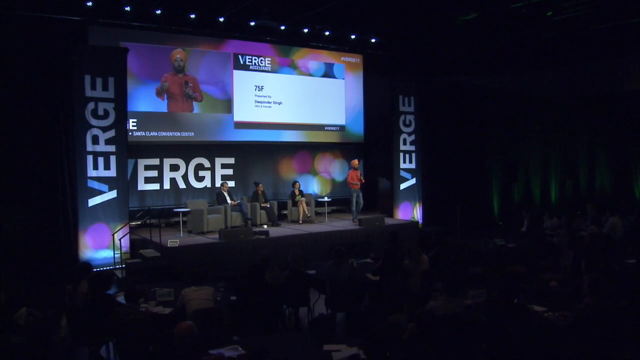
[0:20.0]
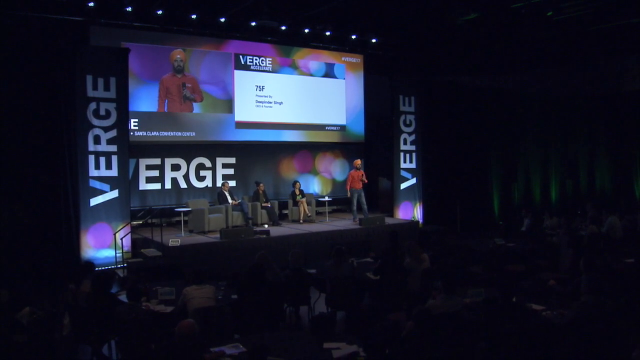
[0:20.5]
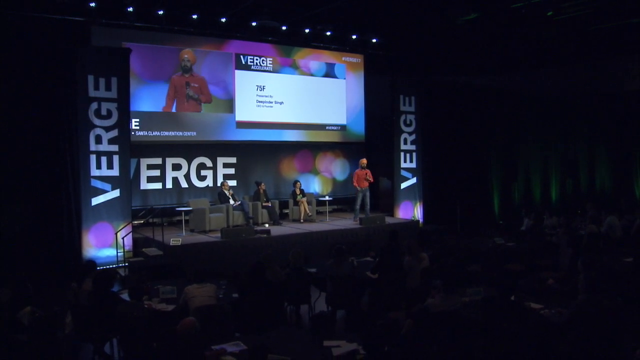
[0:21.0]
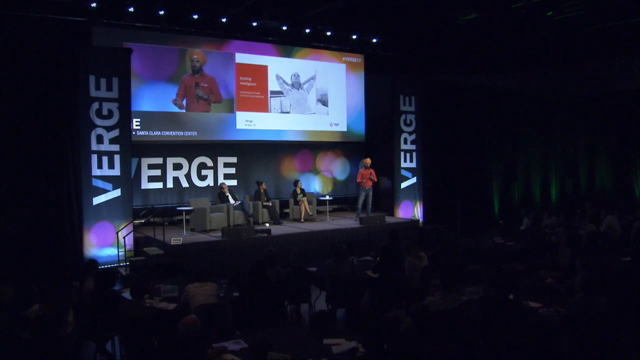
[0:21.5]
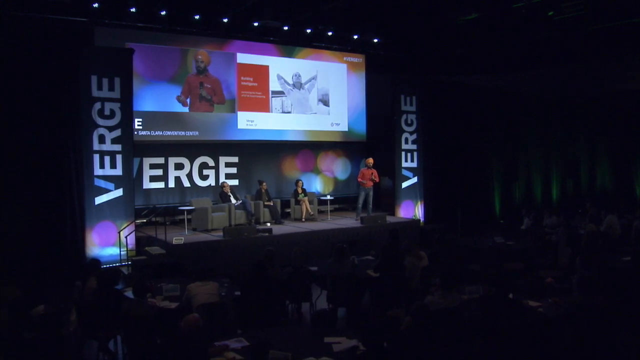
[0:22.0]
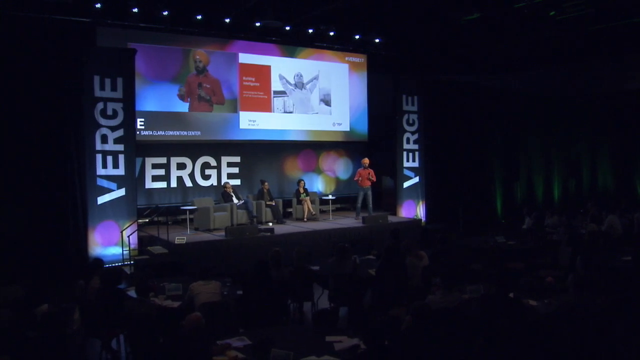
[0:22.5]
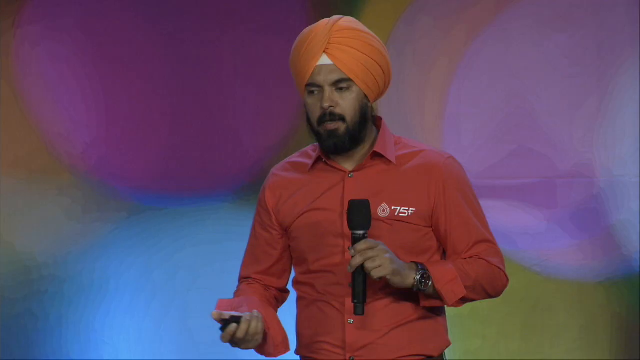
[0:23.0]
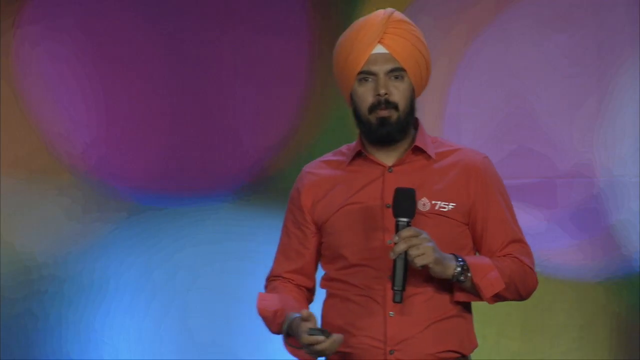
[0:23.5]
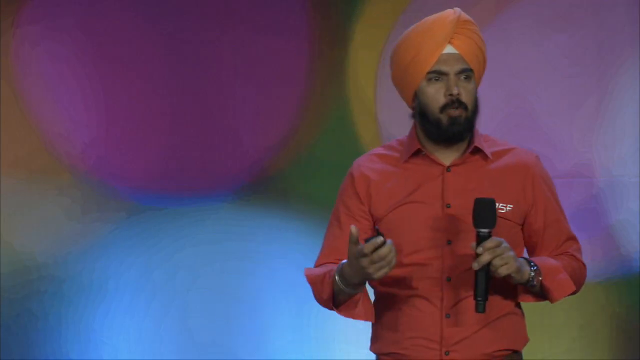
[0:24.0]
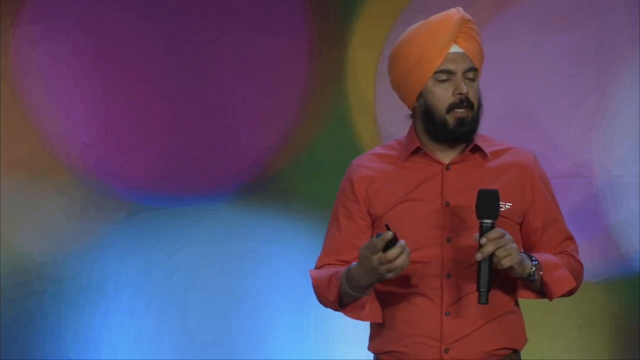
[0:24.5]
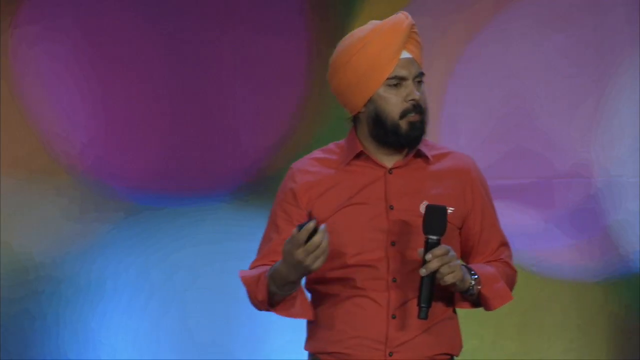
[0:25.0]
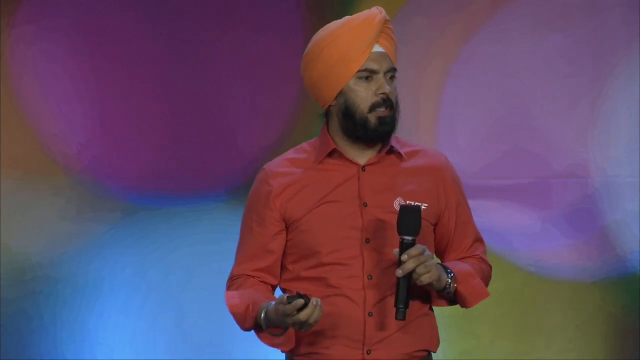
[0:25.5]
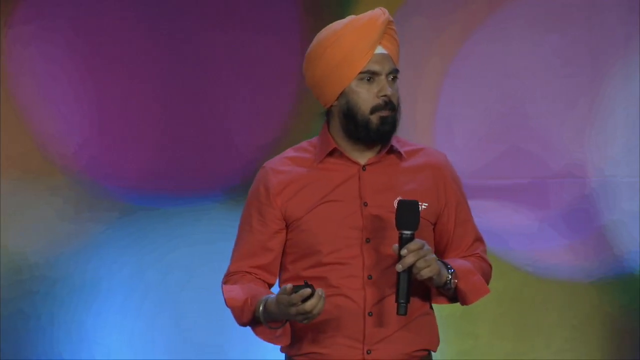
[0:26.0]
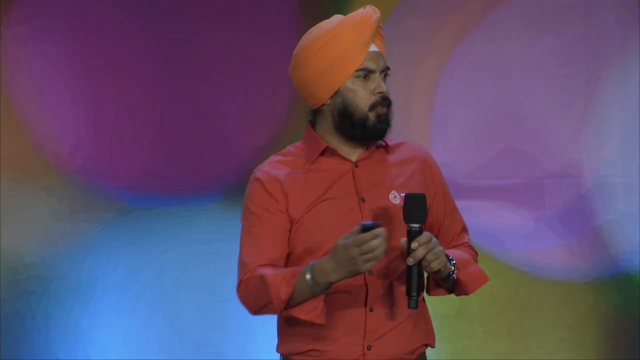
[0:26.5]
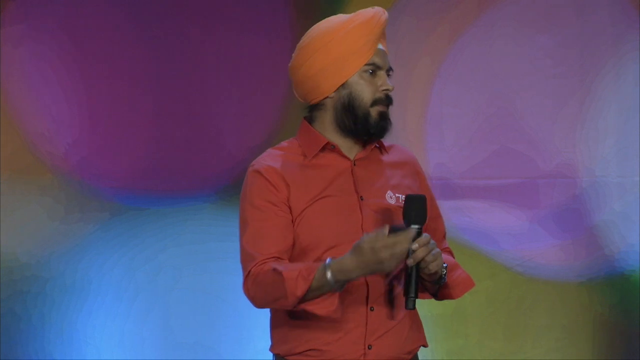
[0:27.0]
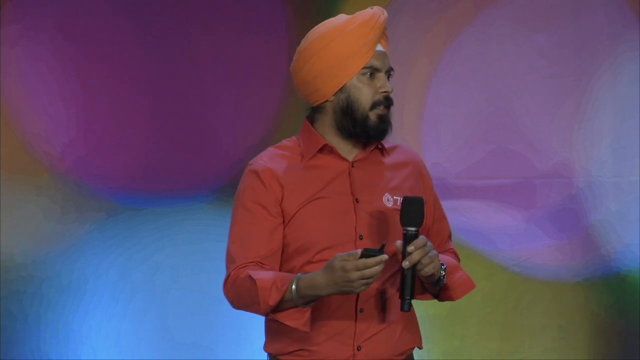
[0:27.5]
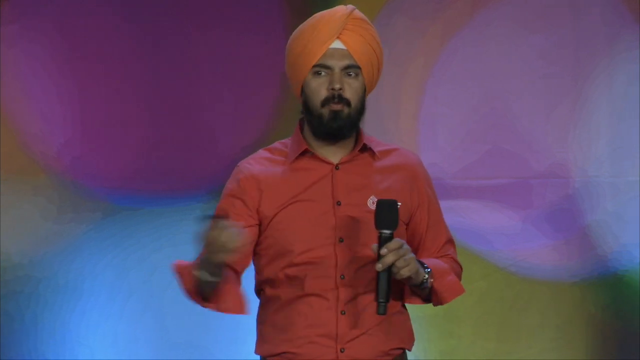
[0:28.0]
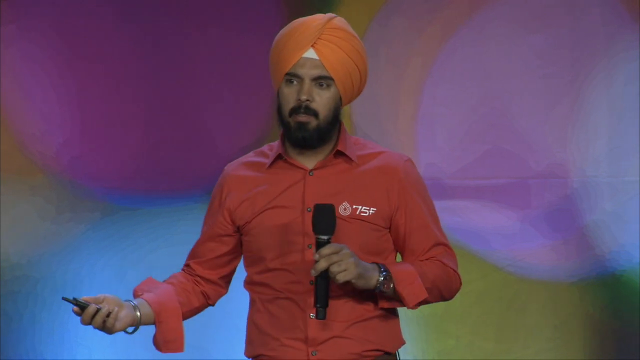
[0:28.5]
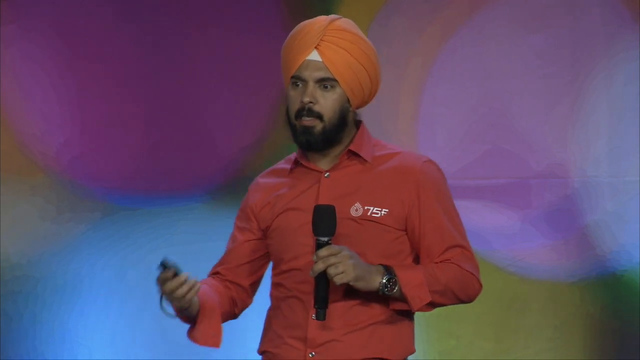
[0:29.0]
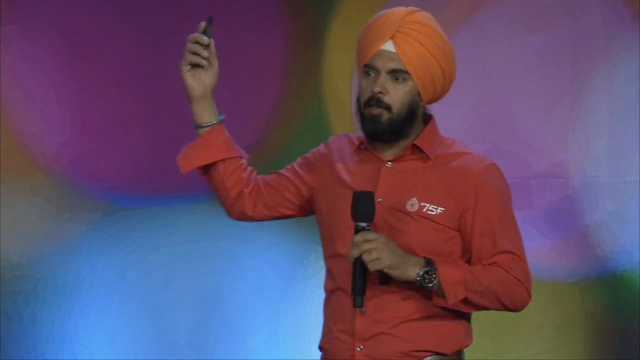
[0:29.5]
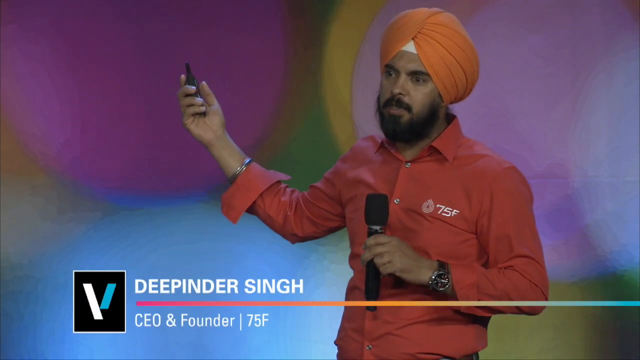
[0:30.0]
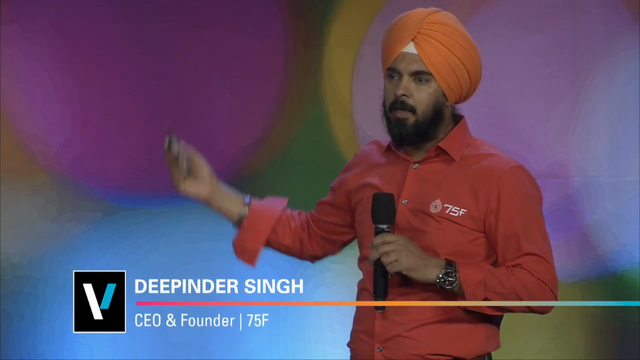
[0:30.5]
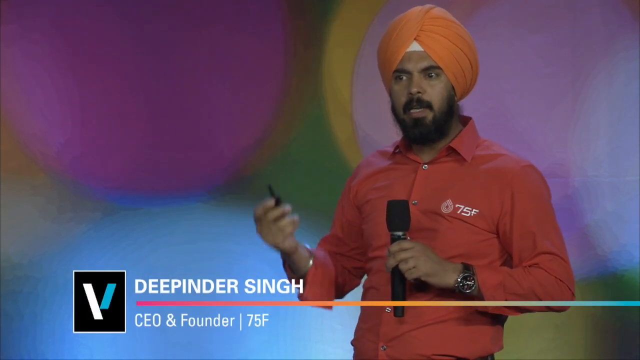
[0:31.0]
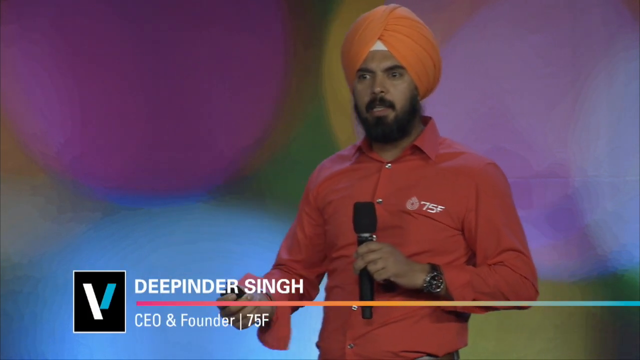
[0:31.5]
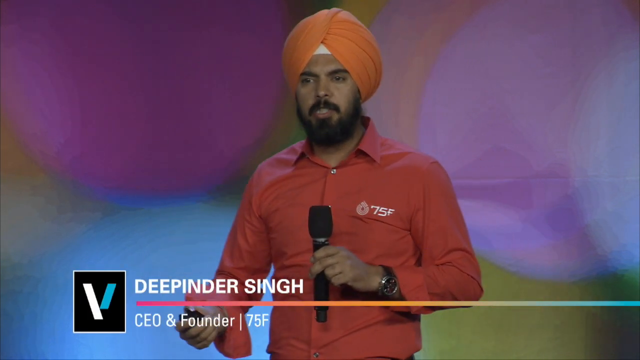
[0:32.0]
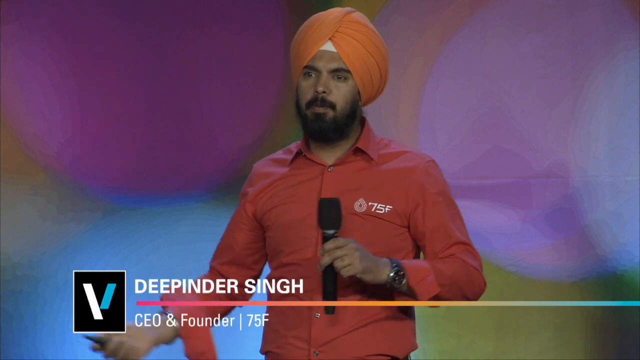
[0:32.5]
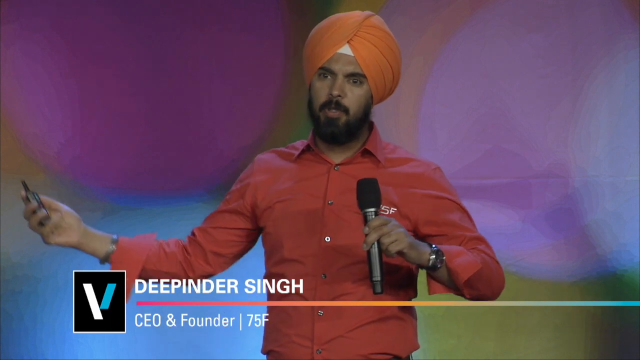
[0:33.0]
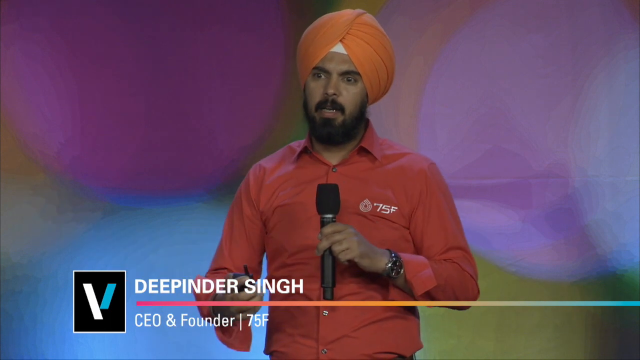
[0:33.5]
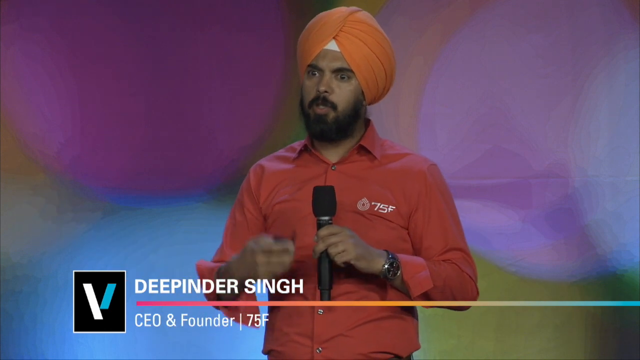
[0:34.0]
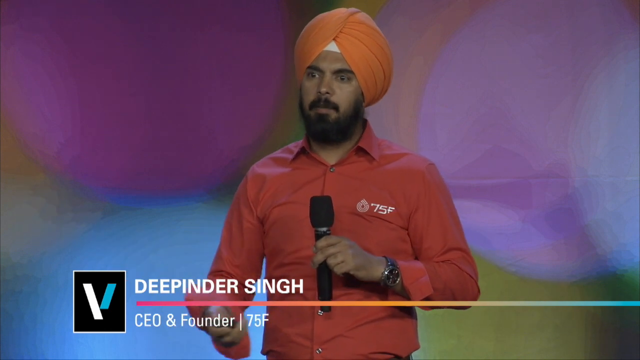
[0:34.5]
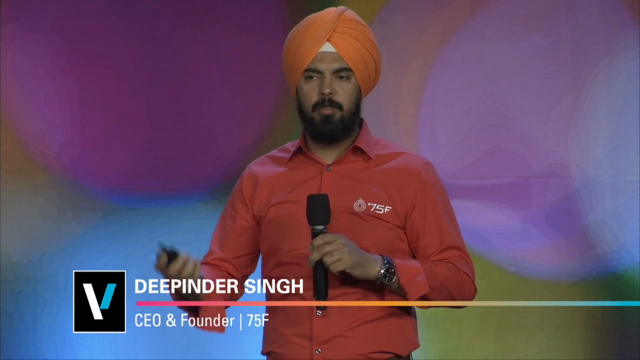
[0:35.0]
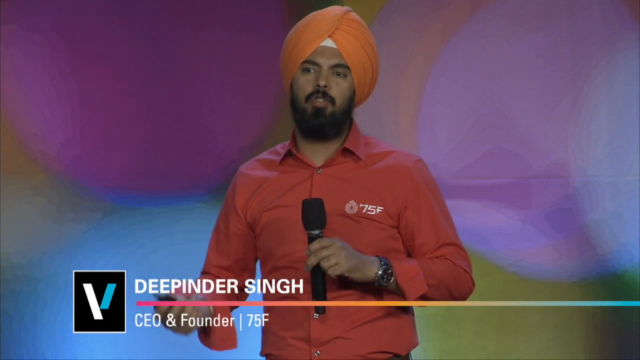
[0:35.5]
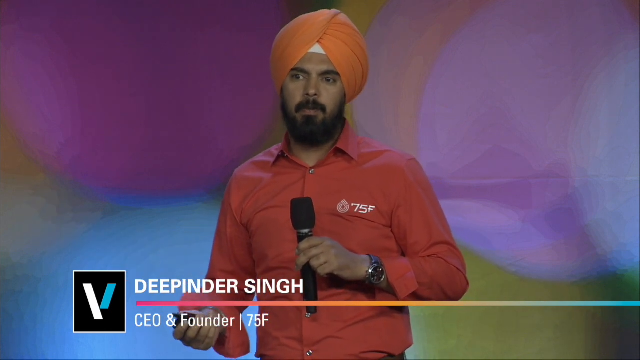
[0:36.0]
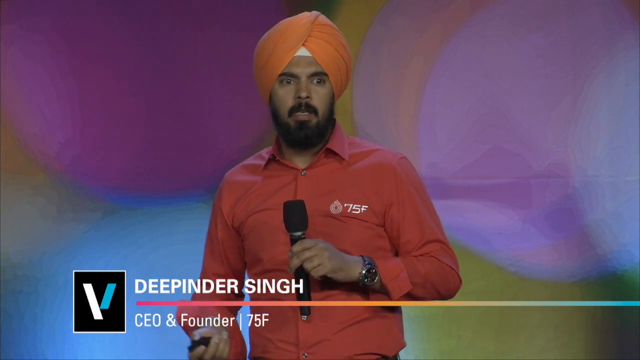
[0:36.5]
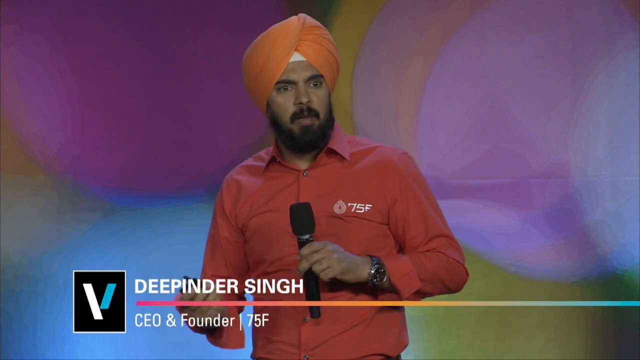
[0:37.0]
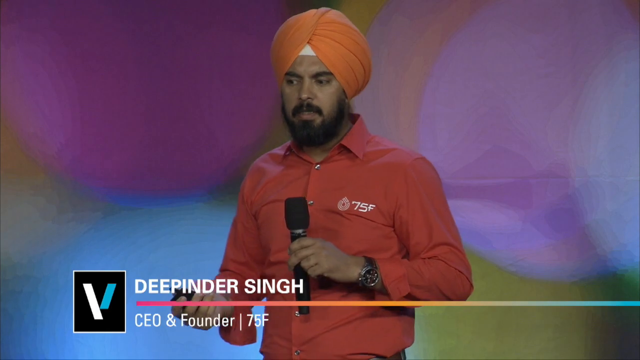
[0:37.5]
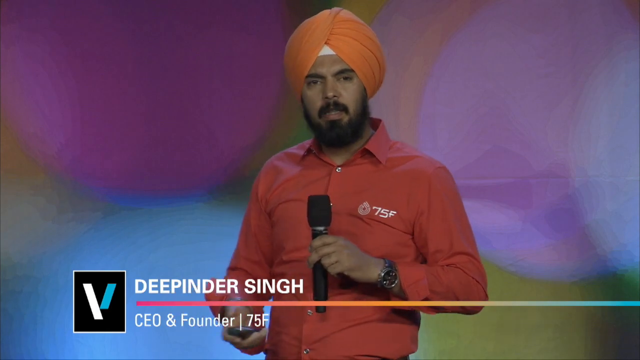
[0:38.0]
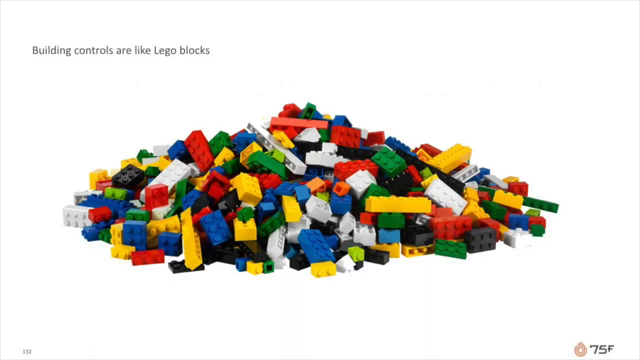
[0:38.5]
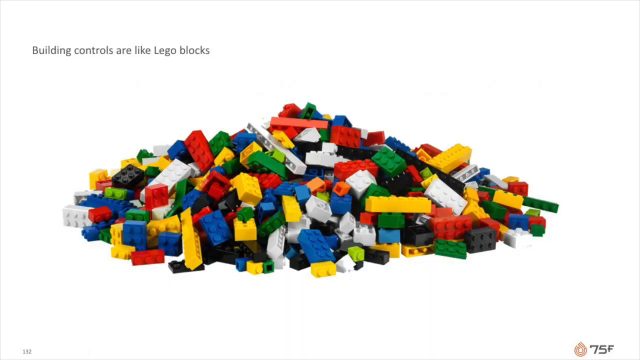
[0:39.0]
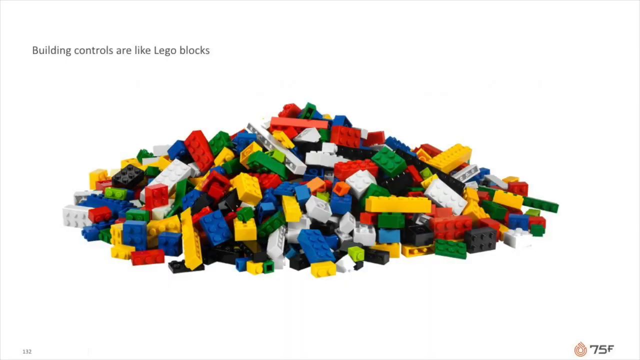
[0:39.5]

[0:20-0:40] A man stands on stage presenting to an audience, talking into a microphone. To his right on stage are four chairs, three of them occupied by people. Above the man and the stage is a projection of him alongside a slide deck. As the slides change, the camera switches to a close-up of the speaker, who gesticulates actively and looks around the audience, swinging his right arm up, down, left and right with passion. Text appears identifying the man as "Deepinder Singh", the CEO and founder of 75F. He keeps moving his arms passionately as he speaks. The screen then switches to an illustration of a pile of Lego bricks of different colours, with text above reading "building controls are like Lego blocks".